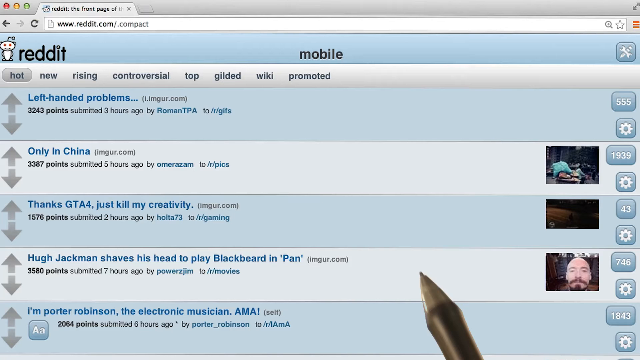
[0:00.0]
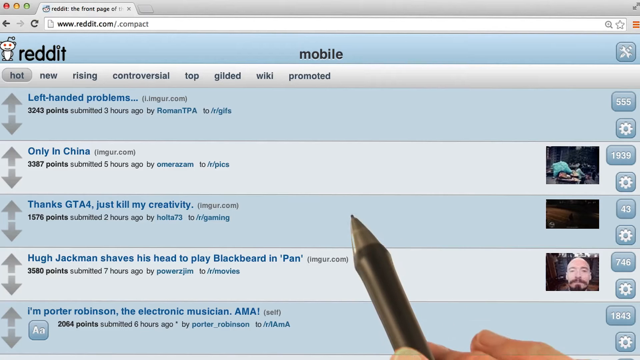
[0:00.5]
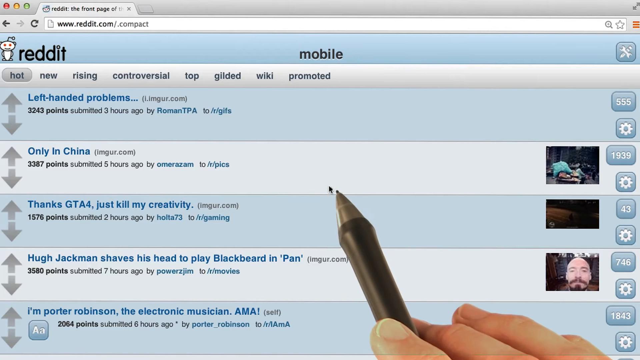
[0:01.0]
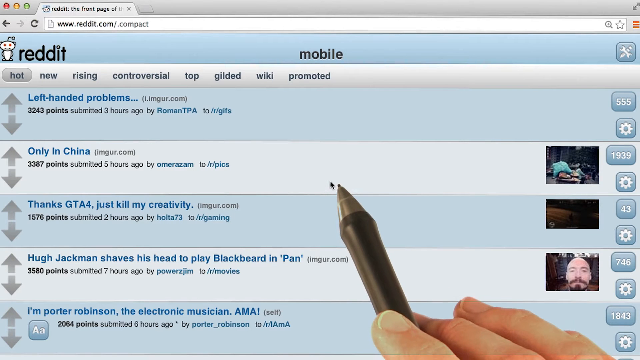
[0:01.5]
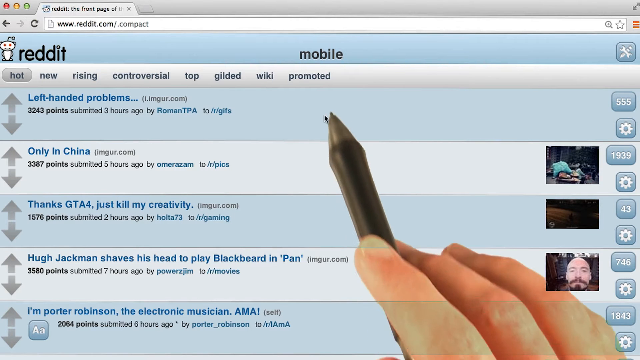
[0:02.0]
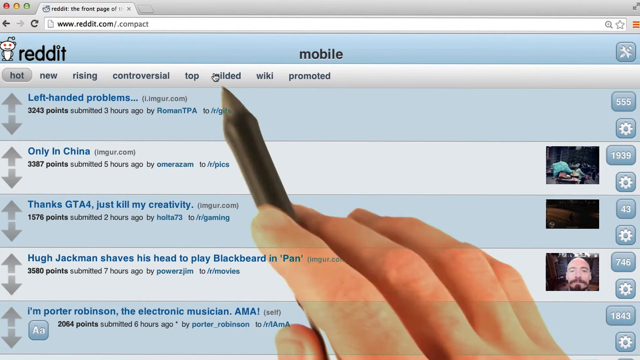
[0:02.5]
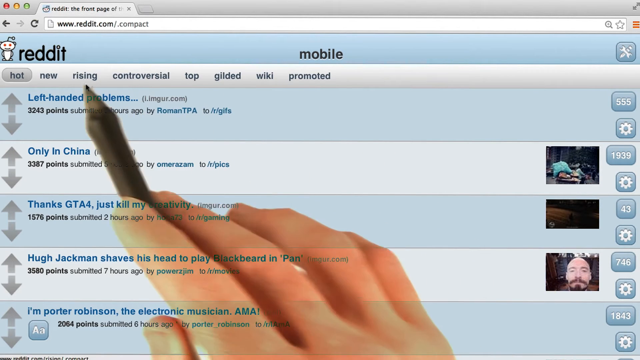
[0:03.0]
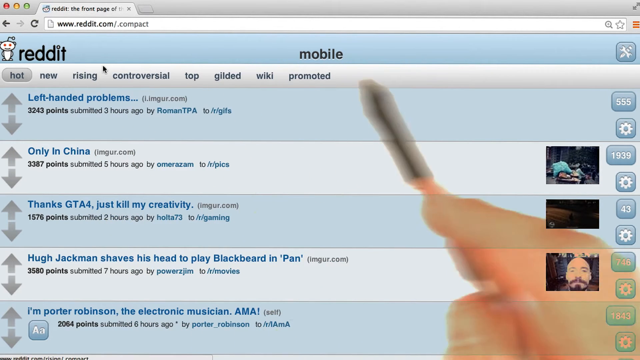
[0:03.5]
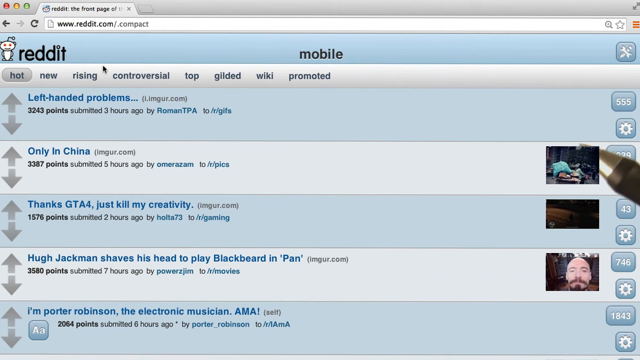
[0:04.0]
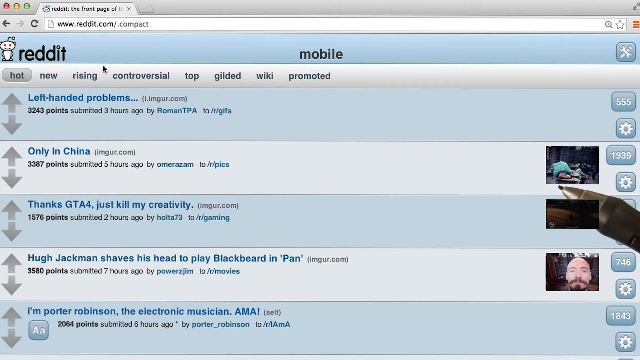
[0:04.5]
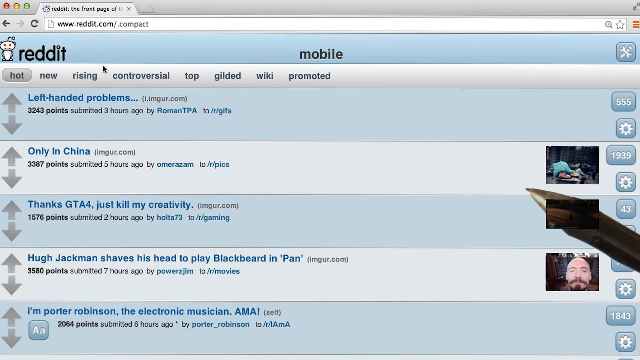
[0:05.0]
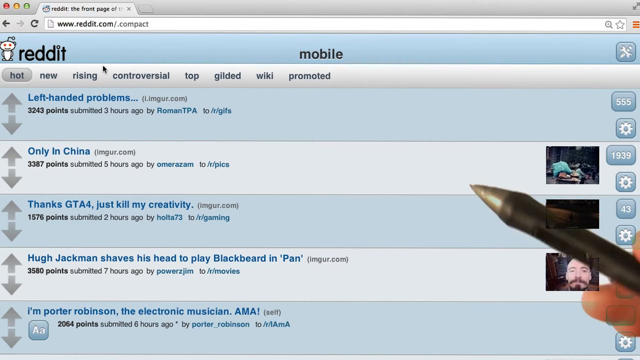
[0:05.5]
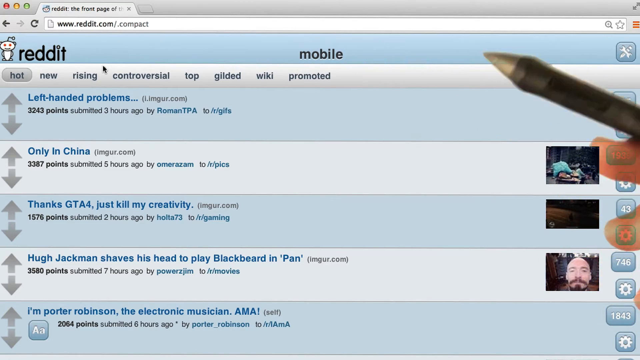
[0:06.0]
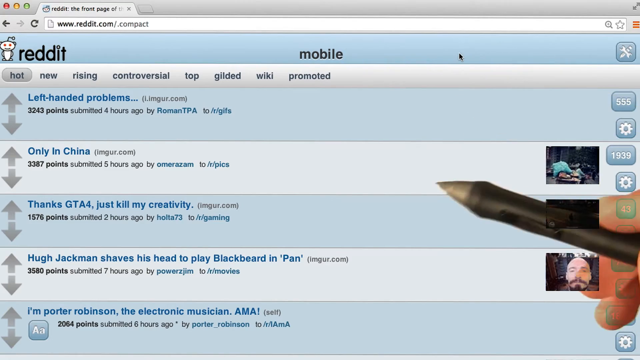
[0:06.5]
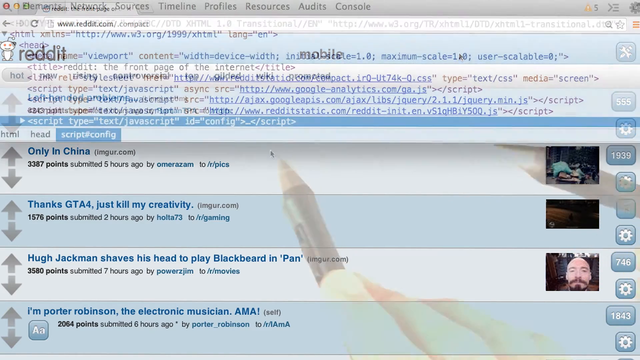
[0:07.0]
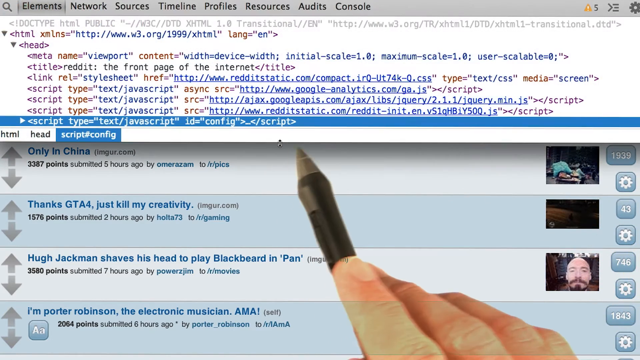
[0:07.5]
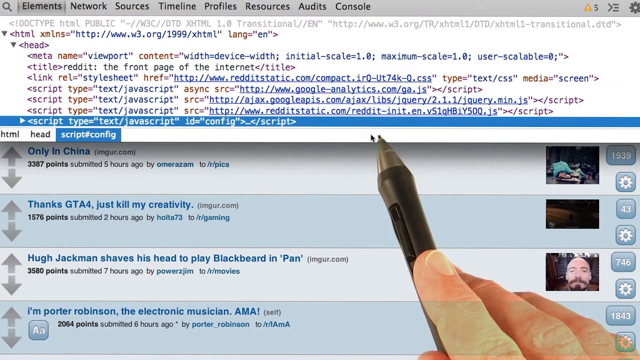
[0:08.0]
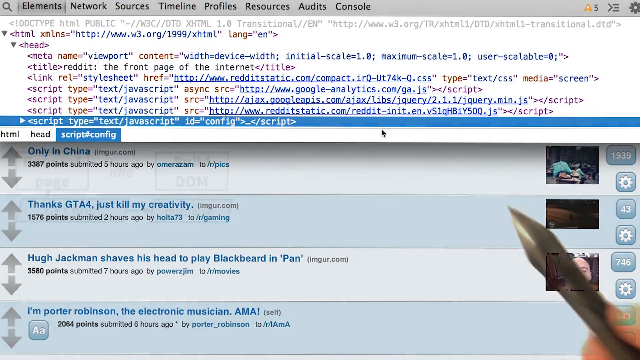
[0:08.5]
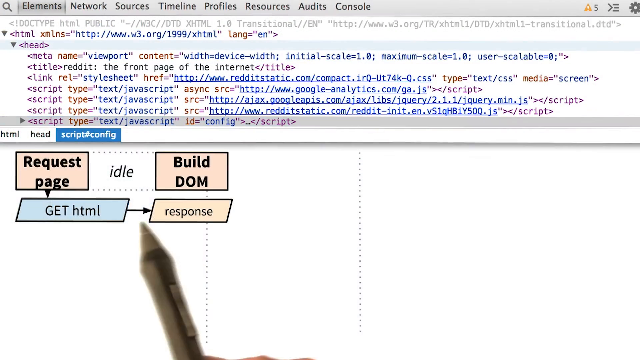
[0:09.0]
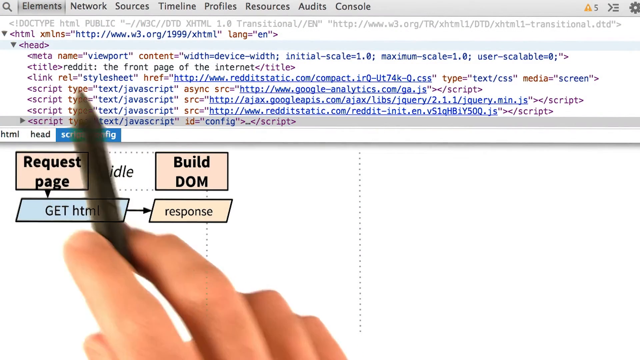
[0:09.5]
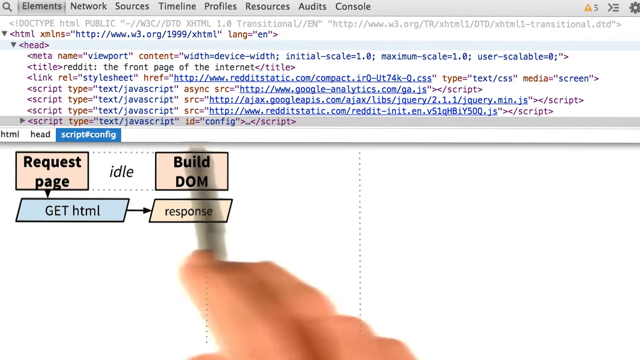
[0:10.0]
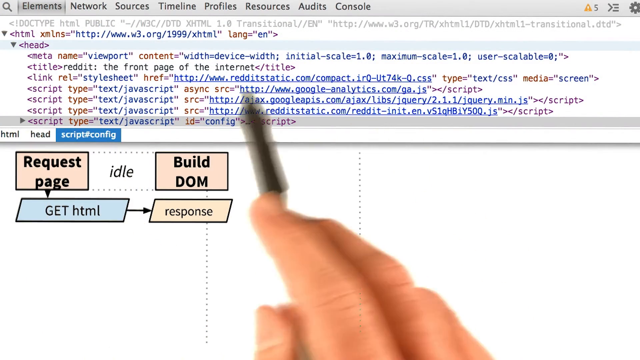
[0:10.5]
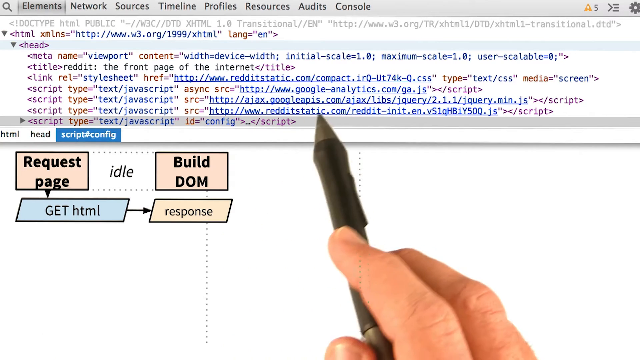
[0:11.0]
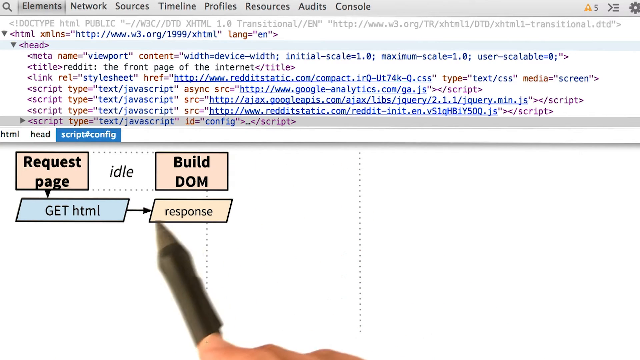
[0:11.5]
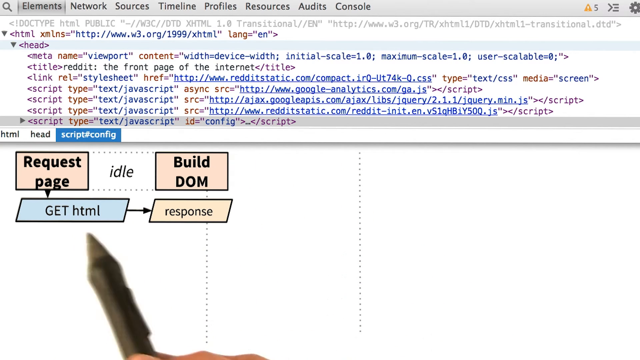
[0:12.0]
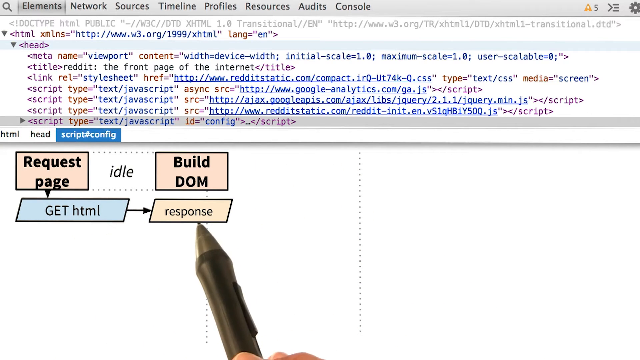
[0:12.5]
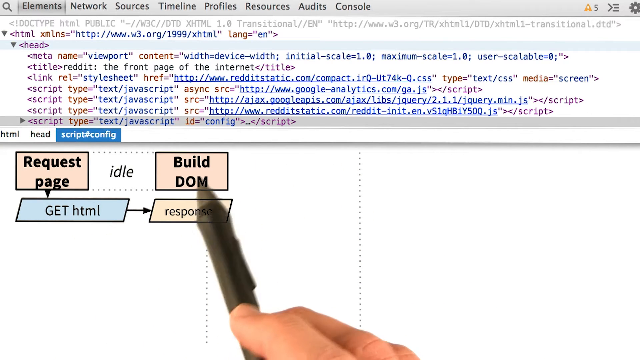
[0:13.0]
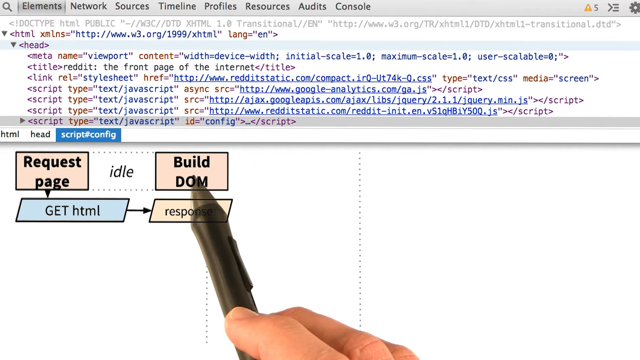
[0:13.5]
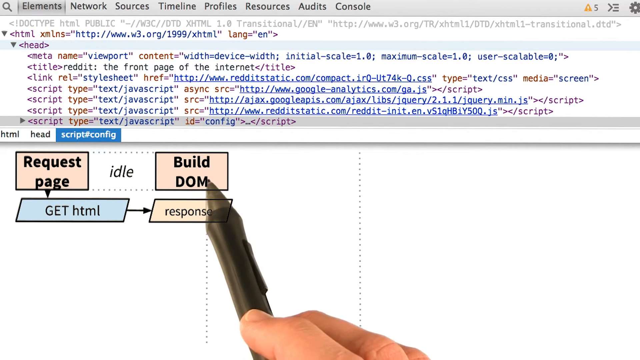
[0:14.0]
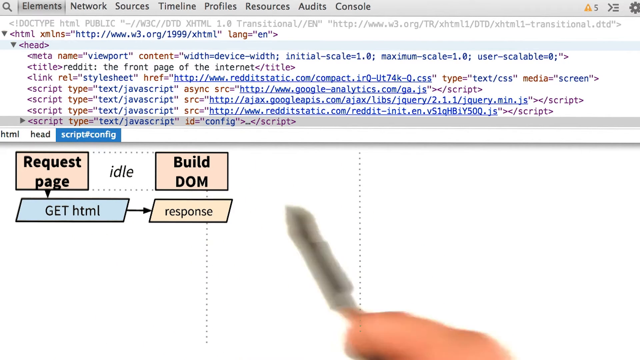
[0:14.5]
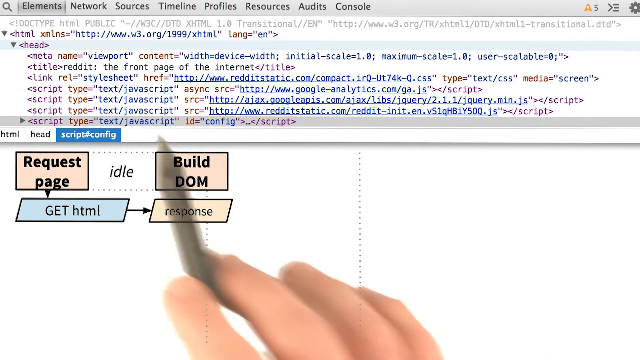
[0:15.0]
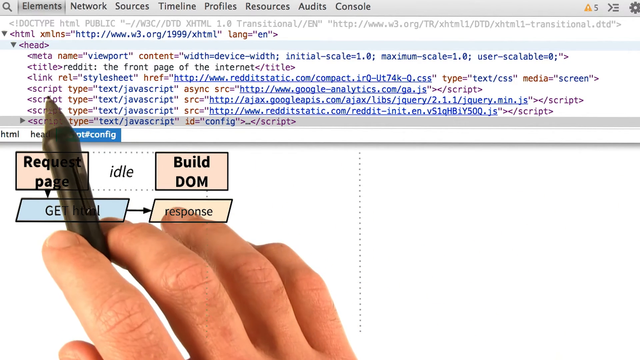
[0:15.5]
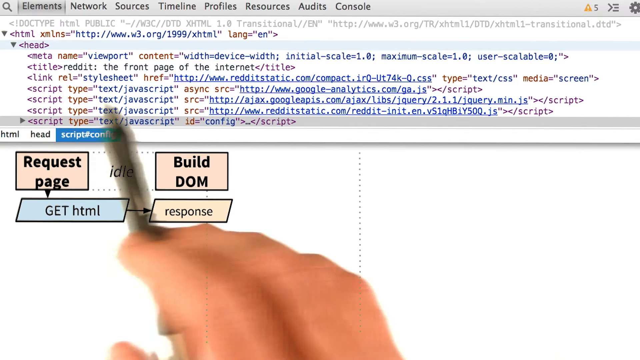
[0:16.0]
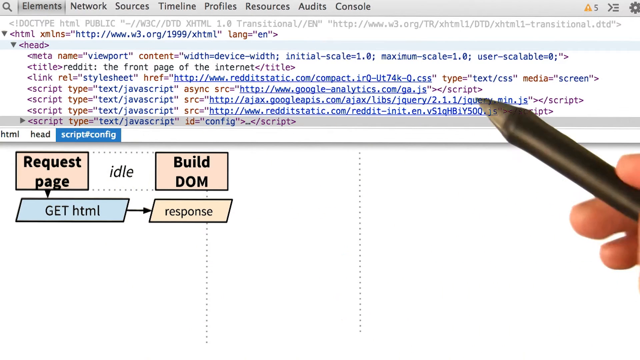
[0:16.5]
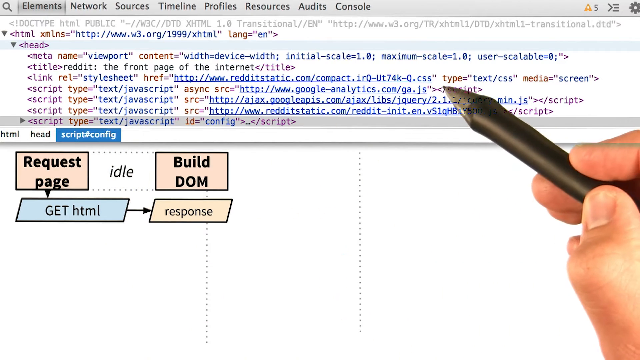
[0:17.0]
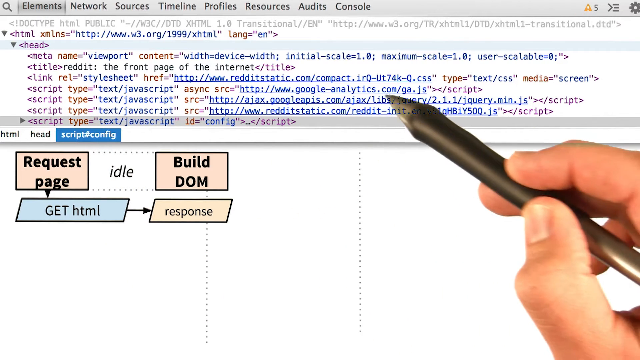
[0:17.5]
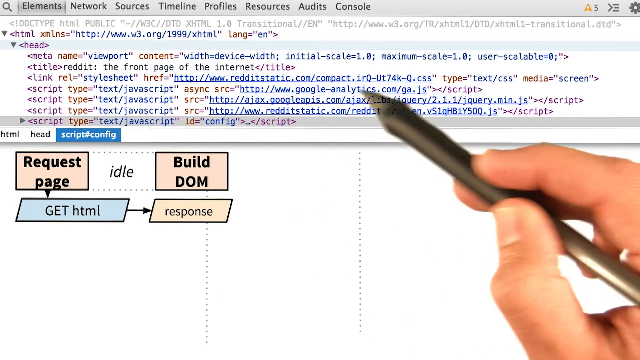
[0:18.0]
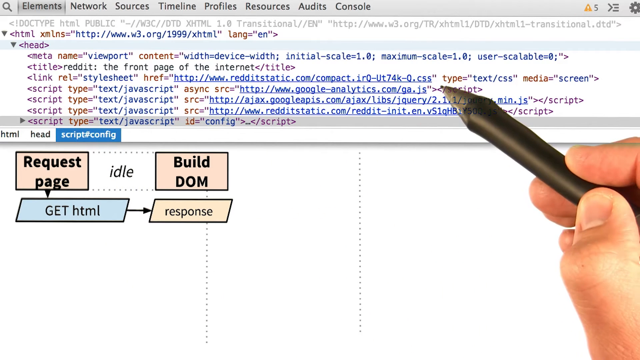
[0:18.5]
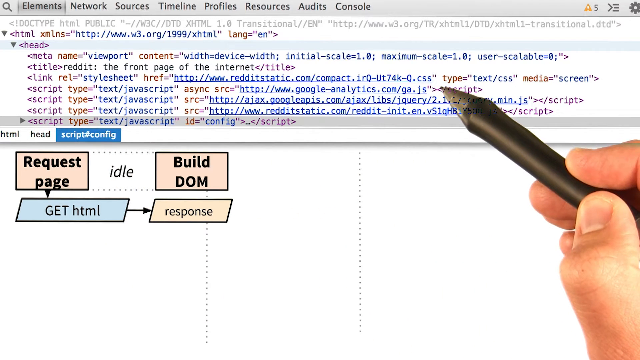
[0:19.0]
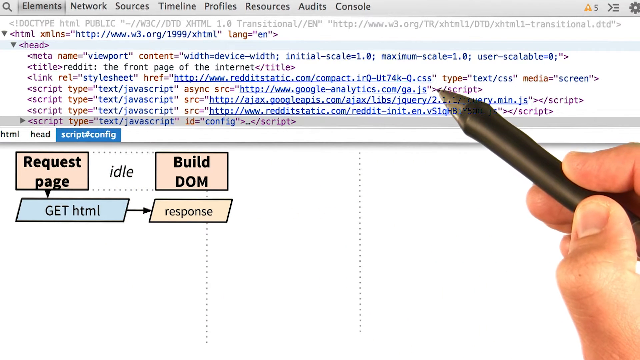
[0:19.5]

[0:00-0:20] The video opens on what appears to be a screenshot of Reddit, shown in a close-up of a Reddit page with a few different posts. No individuals are visible, only a little of someone's hand holding a pen or a stylus, which looks like it is pointing out different parts of the page. The page is probably on a desktop. After a few seconds, a dissolve leads to a page showing code on top, with a little of the Reddit page still visible at the bottom. In another shot, the individual points out a few lines of code. Underneath the code there appears to be text arranged kind of in chart form, apparently showing what each line does: one box says "request page", next to it is "idle", then "build DOM". The person then points to a line. It is probably a training for coding.